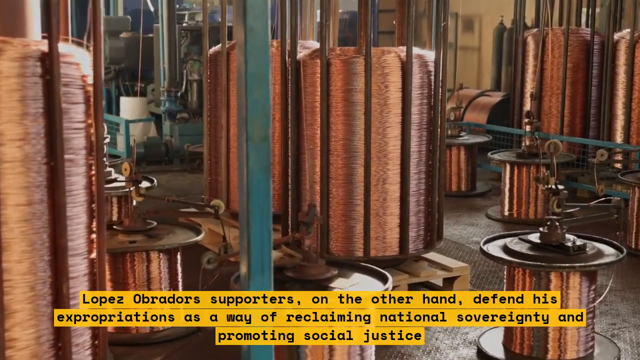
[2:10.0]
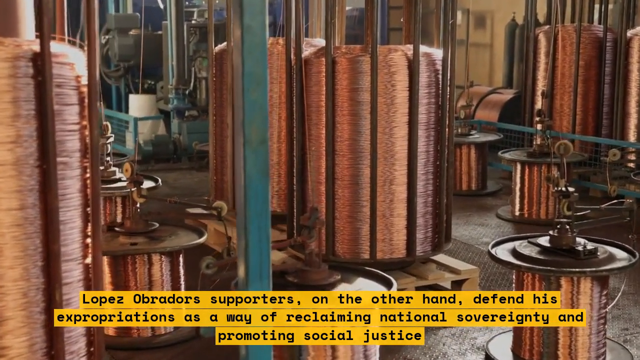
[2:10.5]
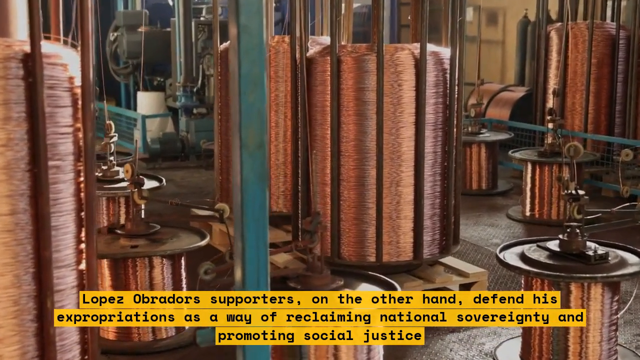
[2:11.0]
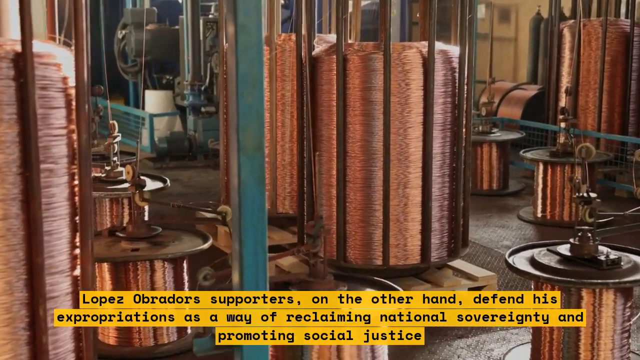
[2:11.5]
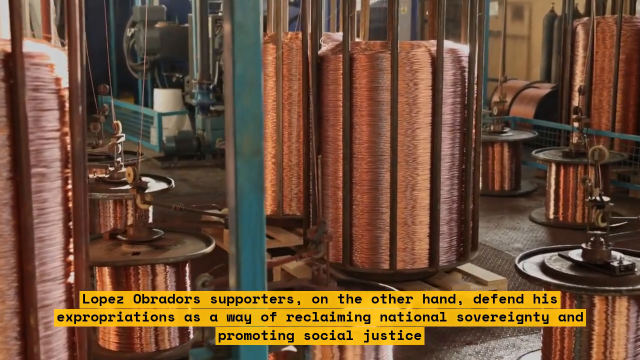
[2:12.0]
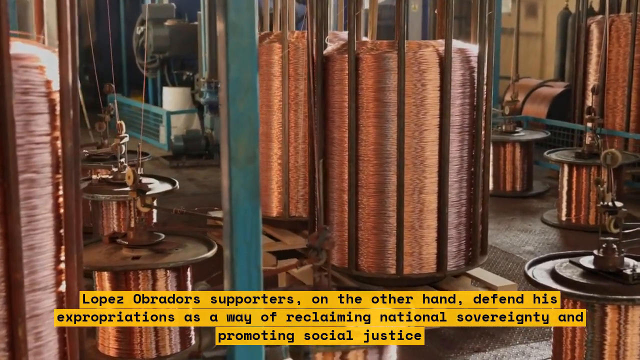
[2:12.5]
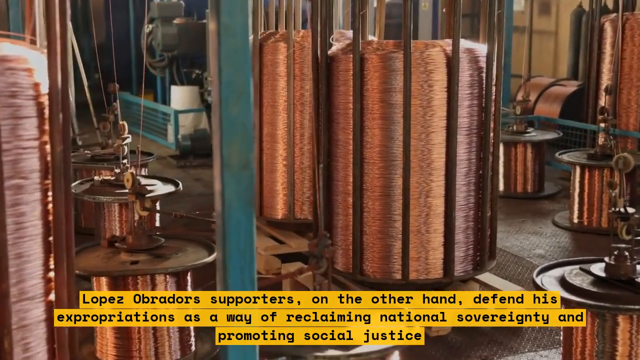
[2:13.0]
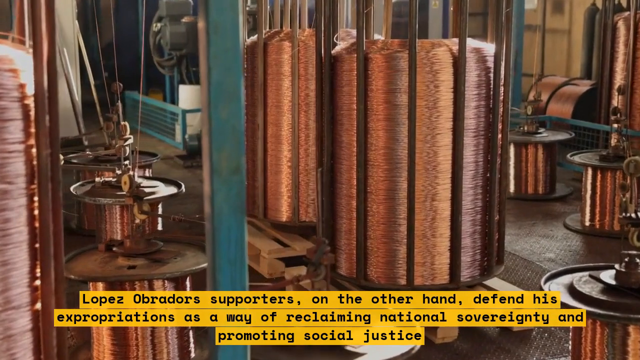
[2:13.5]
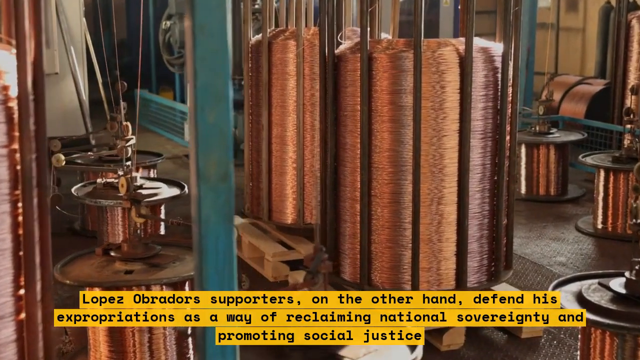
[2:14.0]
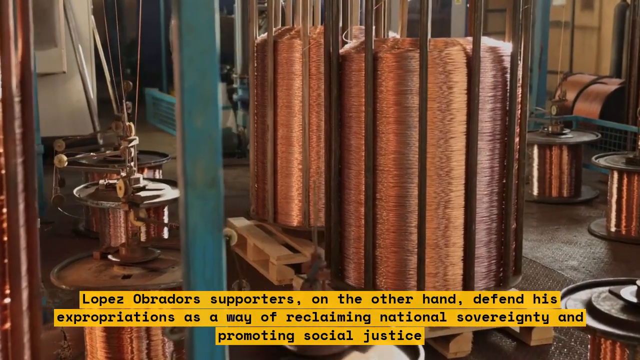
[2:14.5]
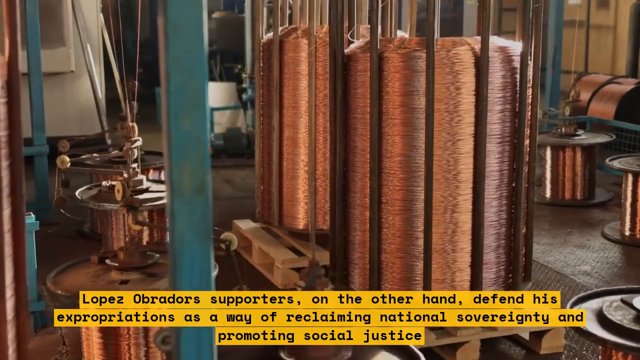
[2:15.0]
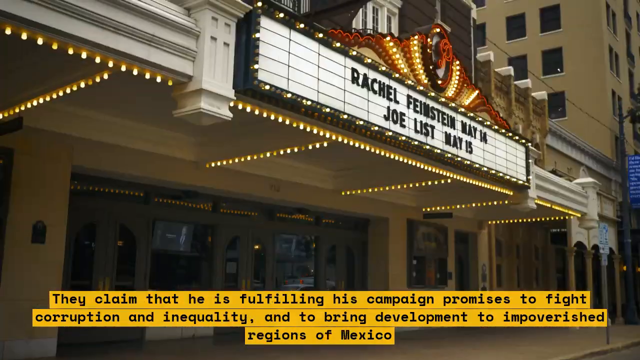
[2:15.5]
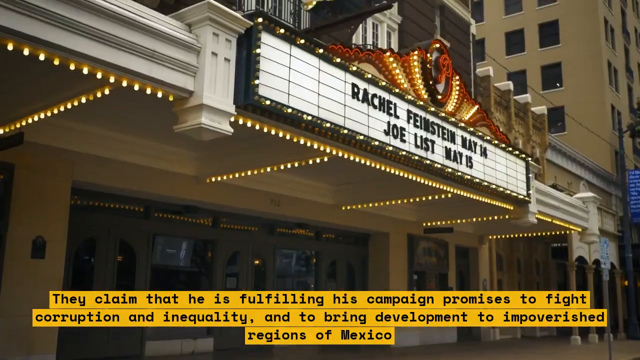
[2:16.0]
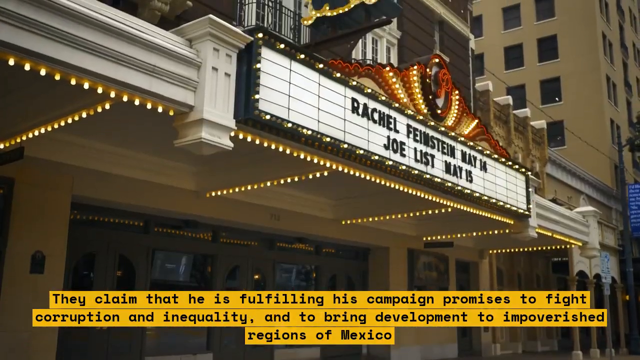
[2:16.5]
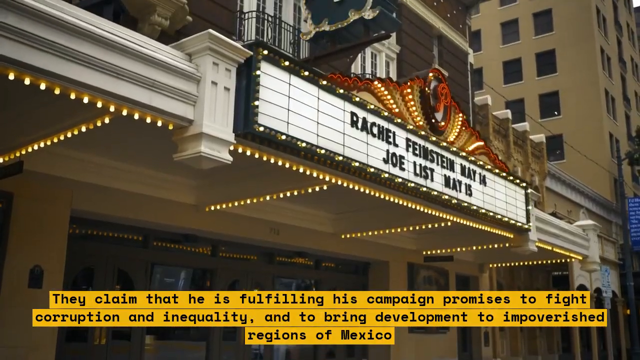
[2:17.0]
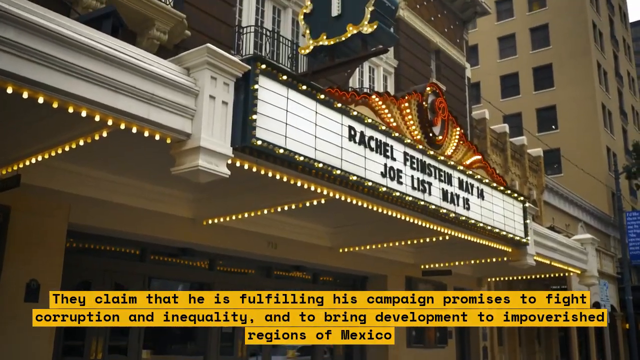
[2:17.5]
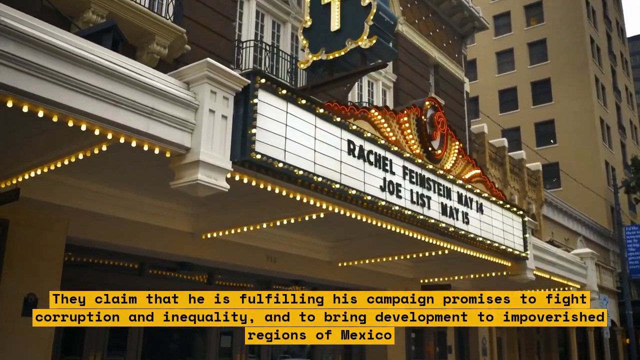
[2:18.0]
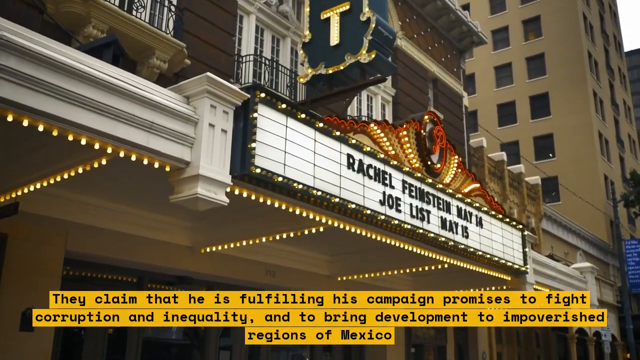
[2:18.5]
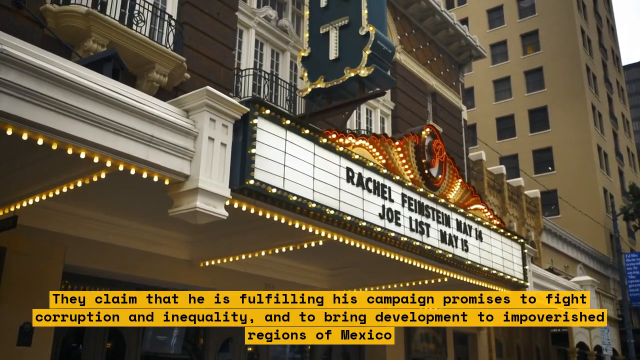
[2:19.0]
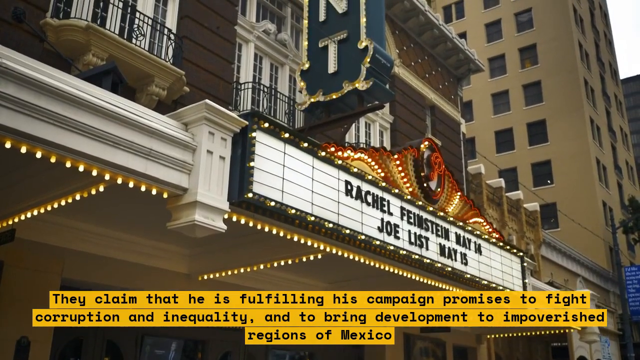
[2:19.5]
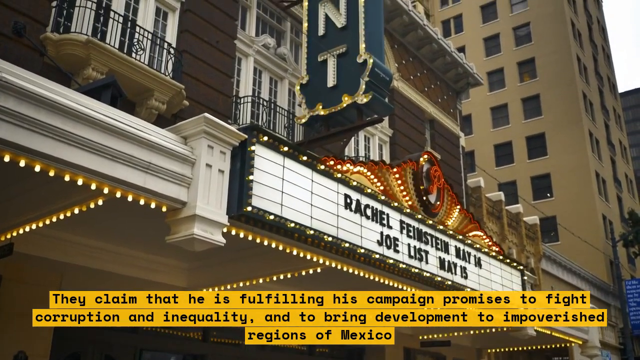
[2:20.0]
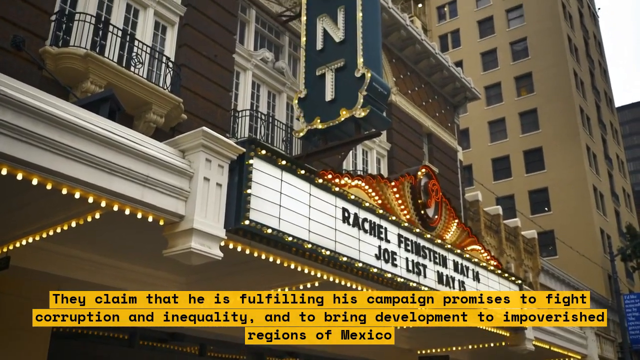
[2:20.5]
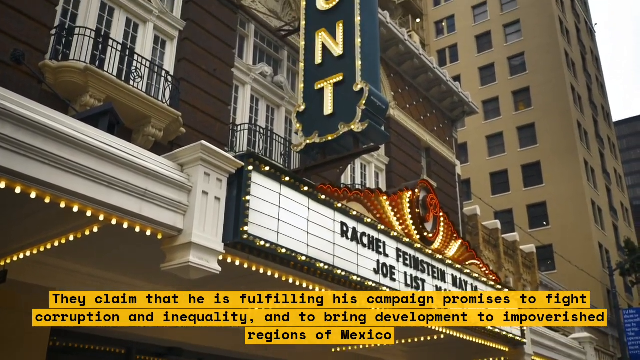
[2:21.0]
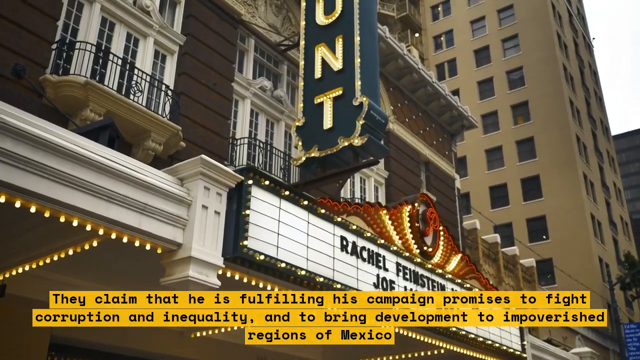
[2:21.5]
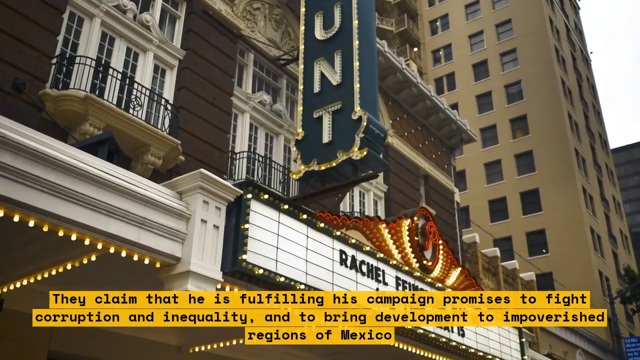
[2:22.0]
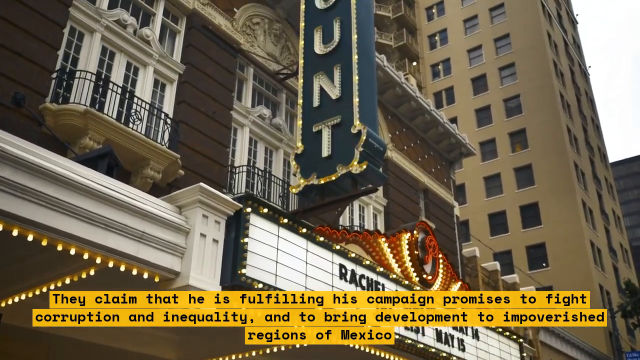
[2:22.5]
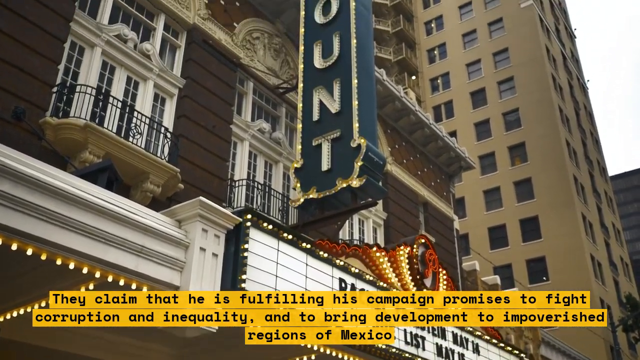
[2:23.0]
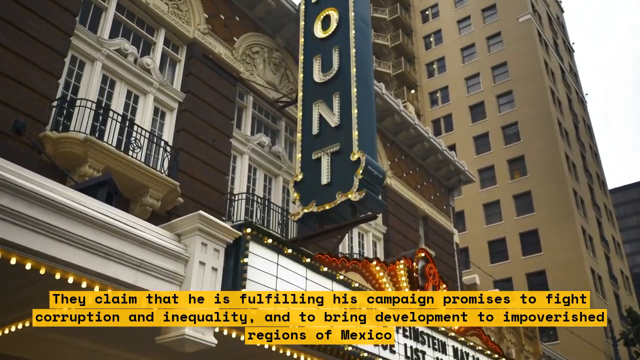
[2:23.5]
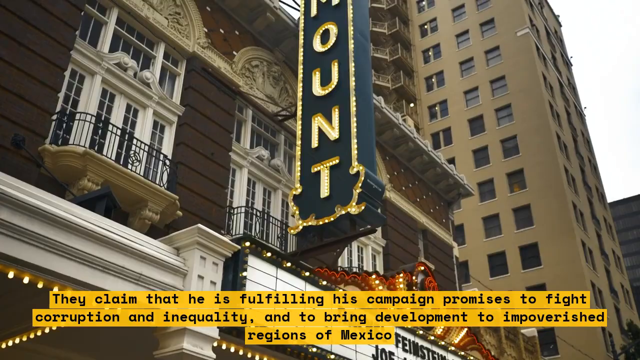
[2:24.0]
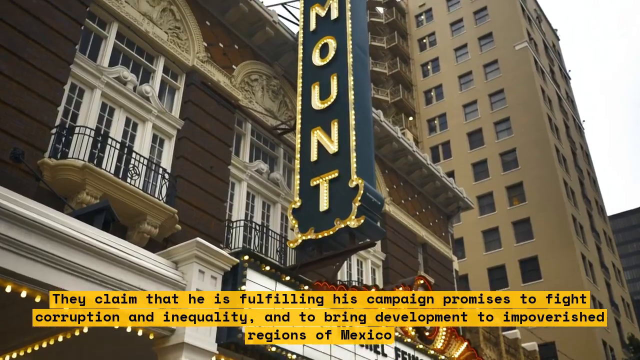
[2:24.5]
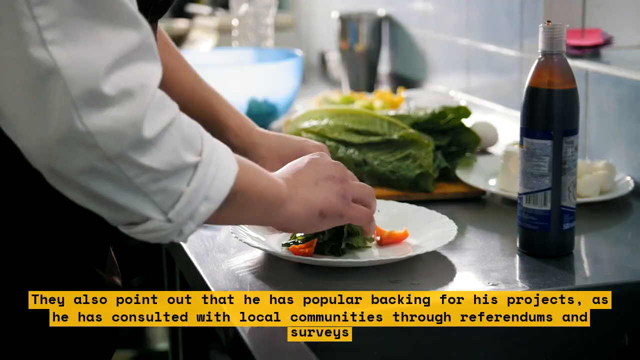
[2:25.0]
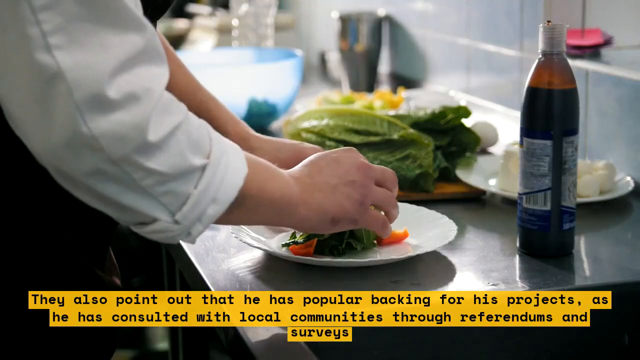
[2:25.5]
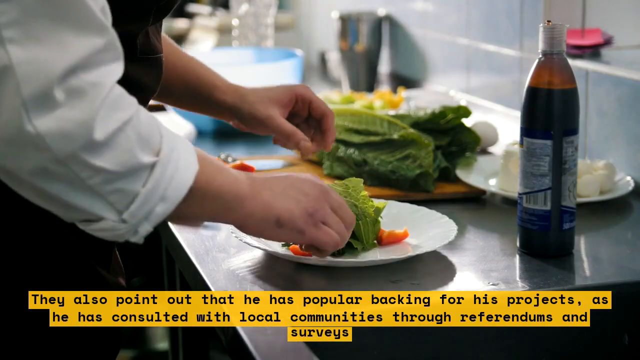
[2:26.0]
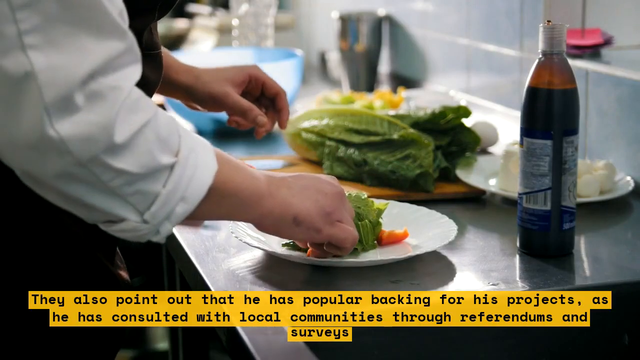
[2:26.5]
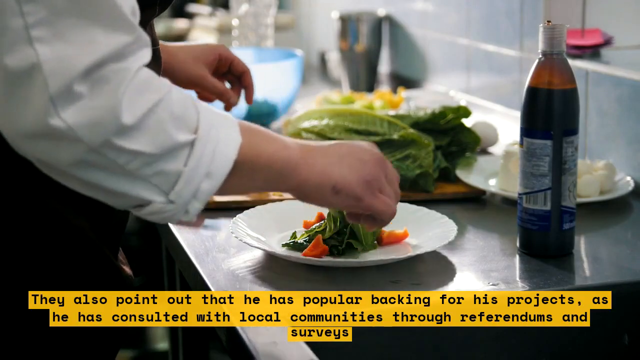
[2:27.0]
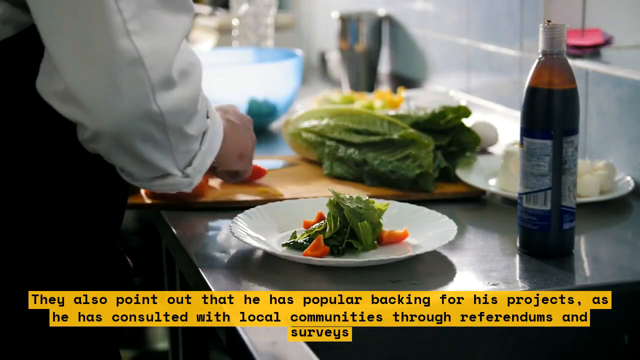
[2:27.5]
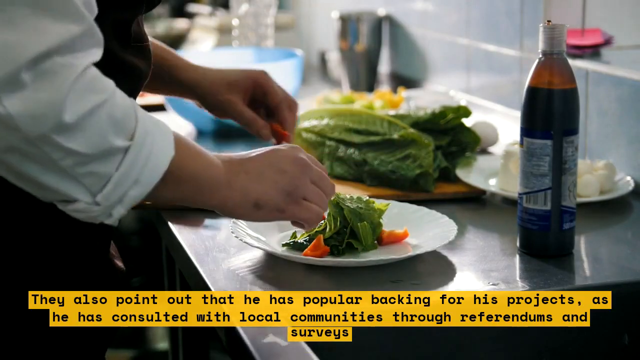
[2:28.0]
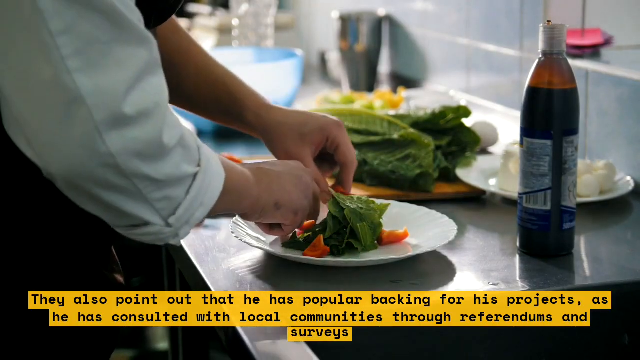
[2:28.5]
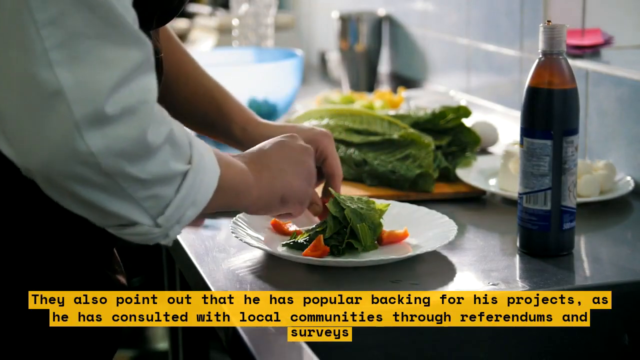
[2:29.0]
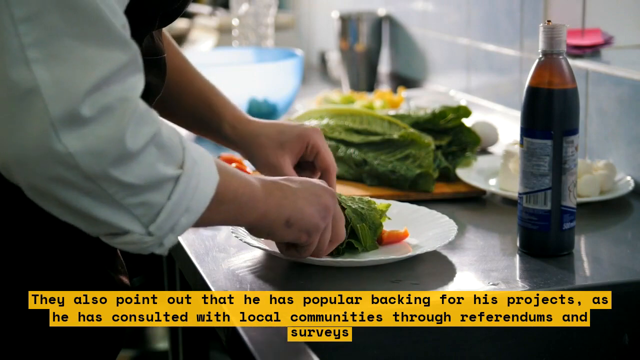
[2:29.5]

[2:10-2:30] The copper coils are shown in what appears to be a manufacturing company that works with copper coils, with the text about Lopez Obrado's supporters defending his expropriations as a way of reclaiming national sovereignty and promoting social justice. The camera circles around the area where the coils are made; they are kind of tall. Next is the outside of a building with a sign reading "Rachel Feinstein, May 14th, Joe List, May 15th." Below the sign, text reads: "they claim that he is fulfilling his campaign promises to fight corruption and inequality and to bring development to impoverishment regions of Mexico." The building appears to be some sort of theater, and the view looks up towards the sign. Then a person, apparently a kitchen worker, prepares a salad, with text reading: "they also point out that he has popular backing for his projects as he has consulted with local communities through referendums and surveys." The person puts lettuce and tomato on a white plate.